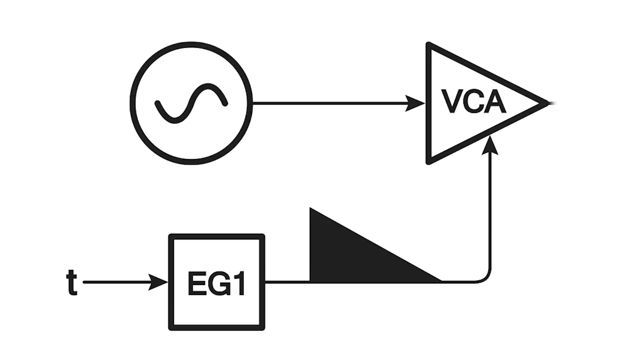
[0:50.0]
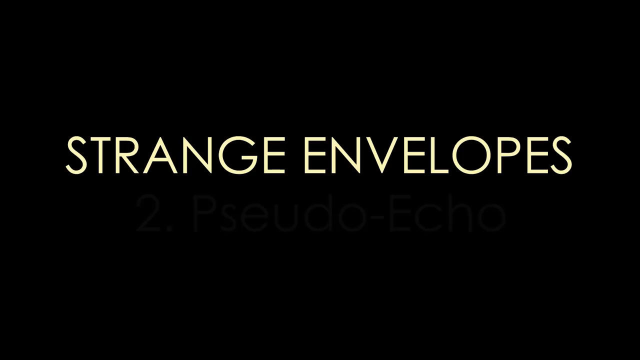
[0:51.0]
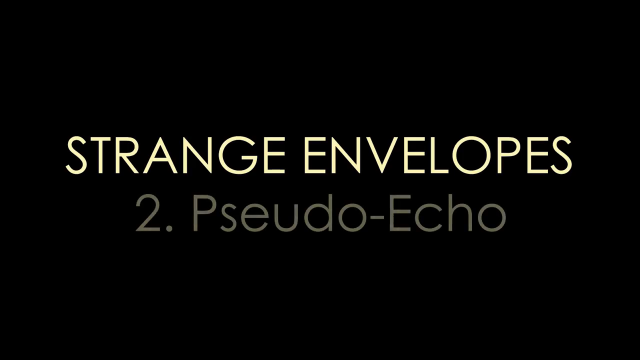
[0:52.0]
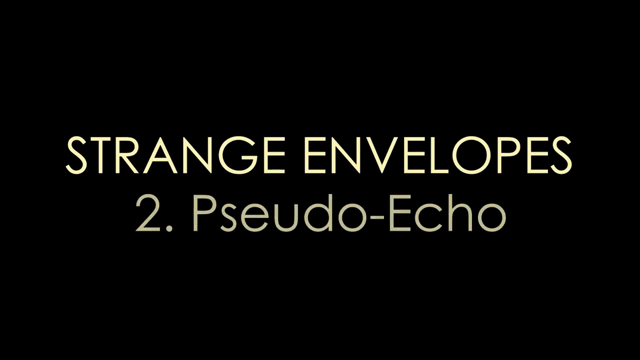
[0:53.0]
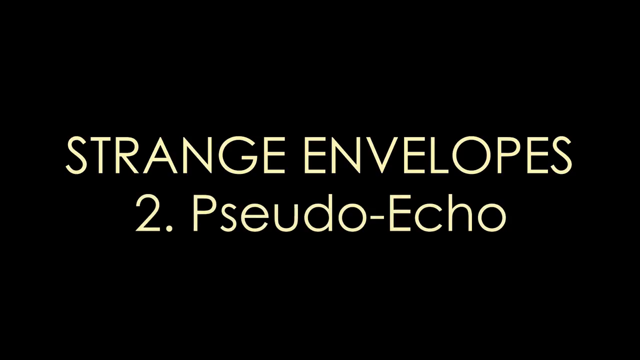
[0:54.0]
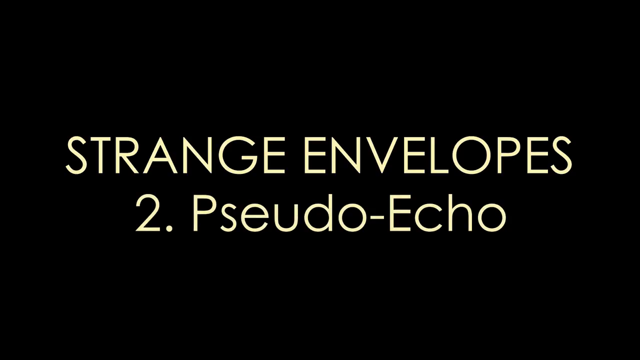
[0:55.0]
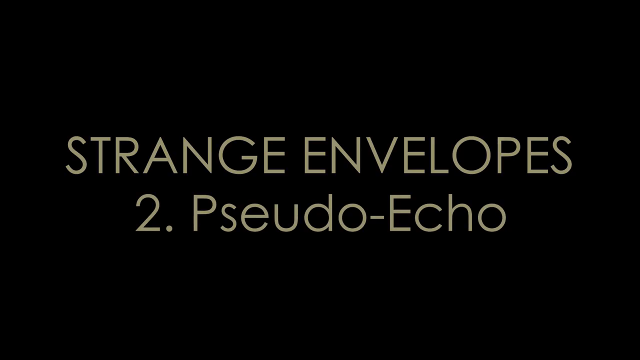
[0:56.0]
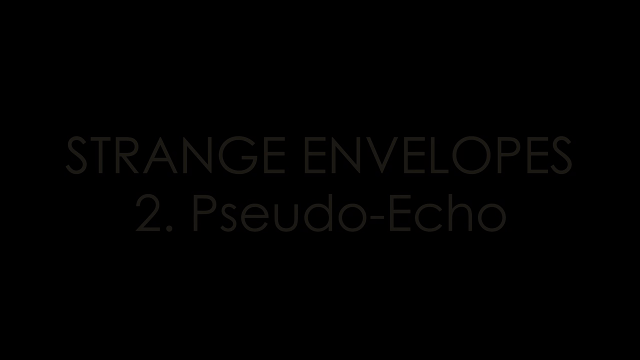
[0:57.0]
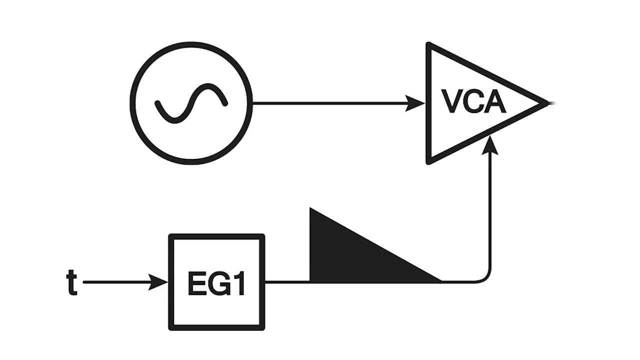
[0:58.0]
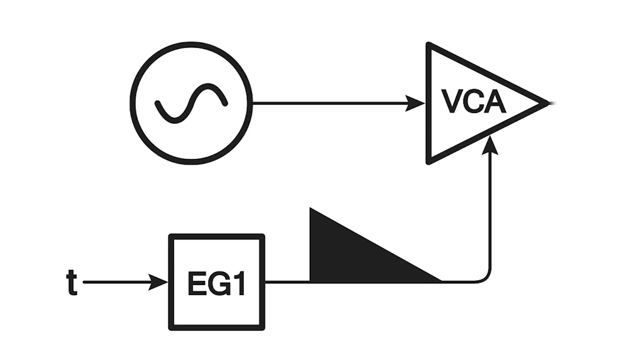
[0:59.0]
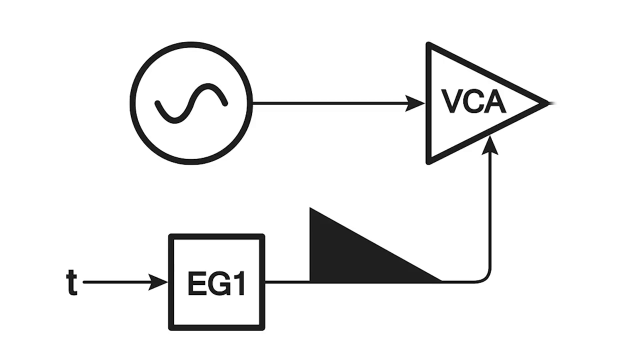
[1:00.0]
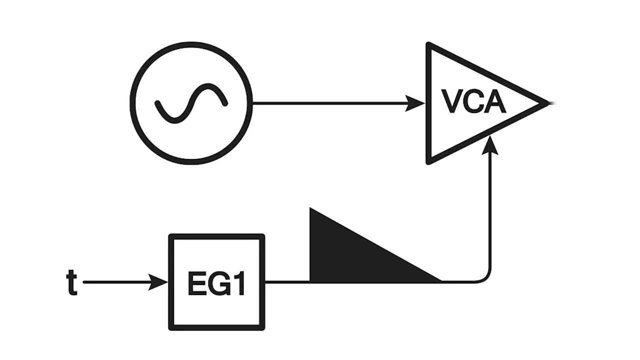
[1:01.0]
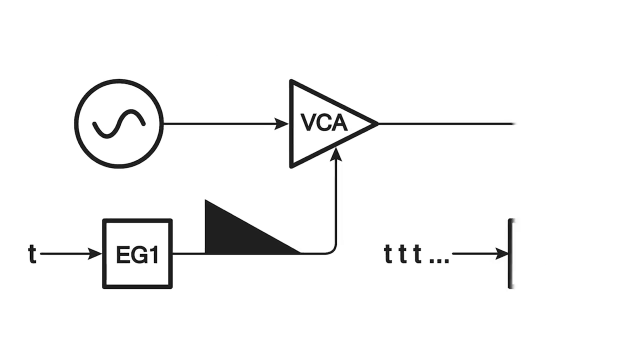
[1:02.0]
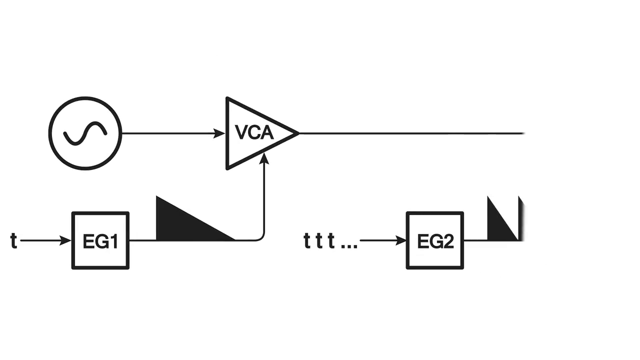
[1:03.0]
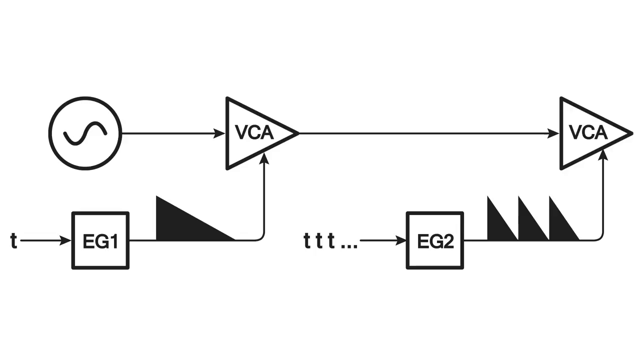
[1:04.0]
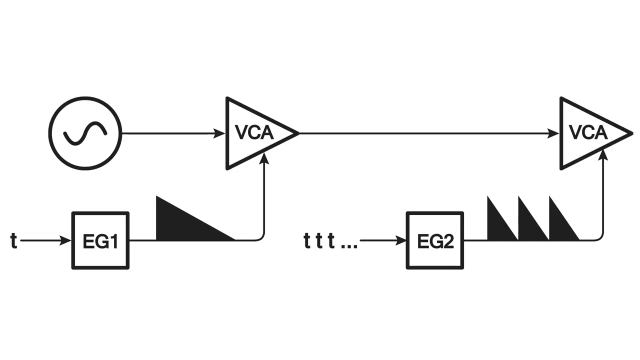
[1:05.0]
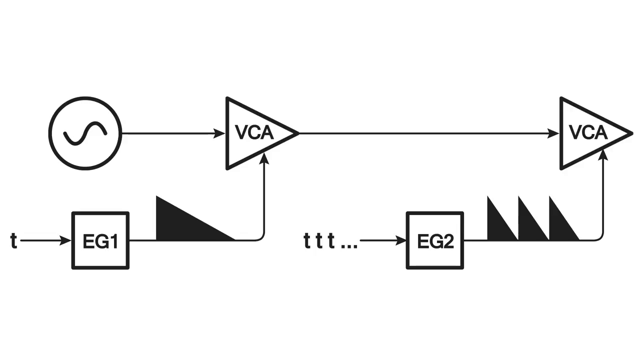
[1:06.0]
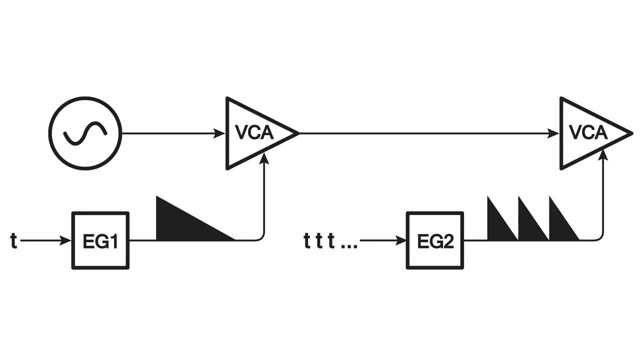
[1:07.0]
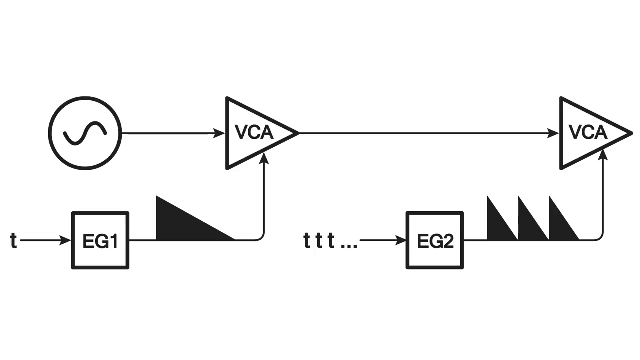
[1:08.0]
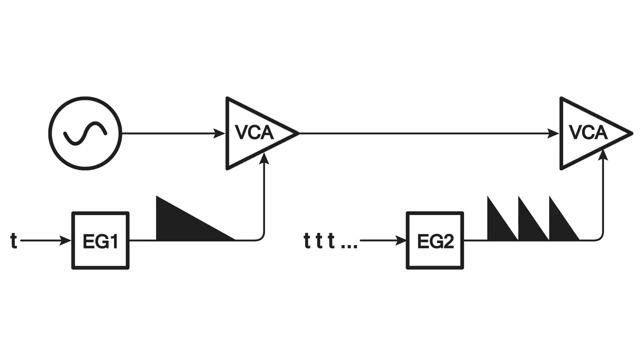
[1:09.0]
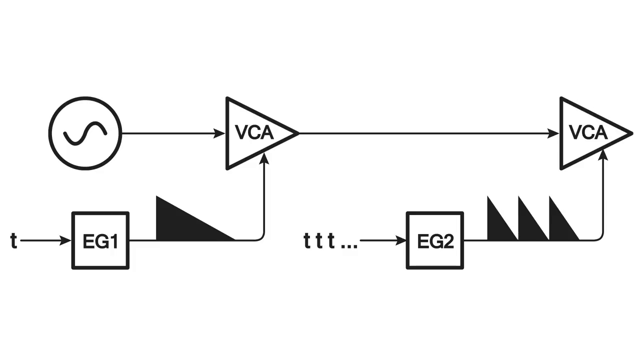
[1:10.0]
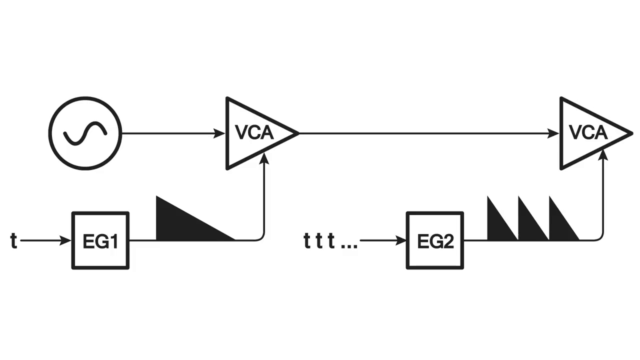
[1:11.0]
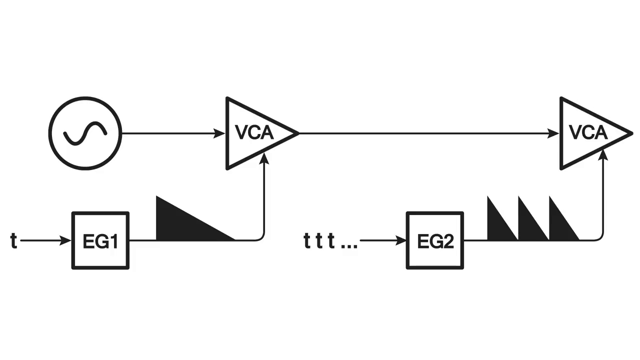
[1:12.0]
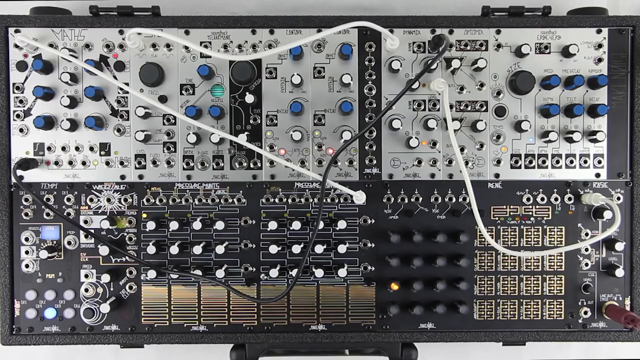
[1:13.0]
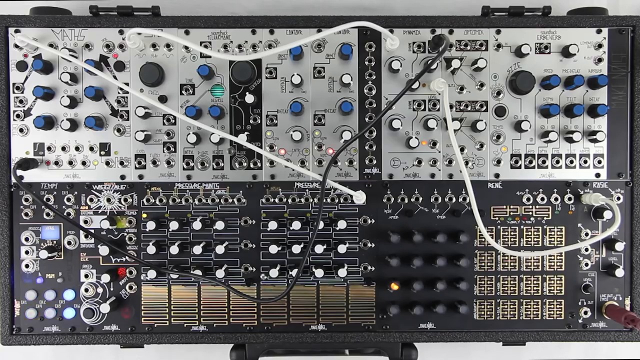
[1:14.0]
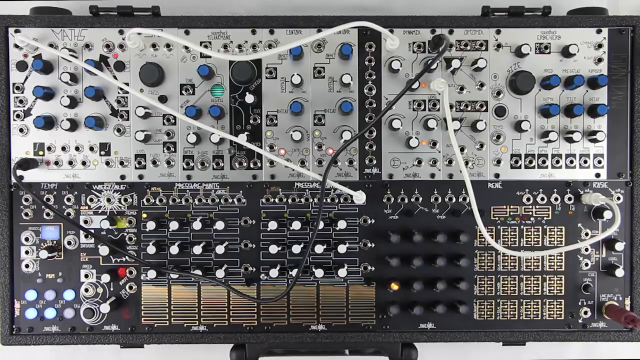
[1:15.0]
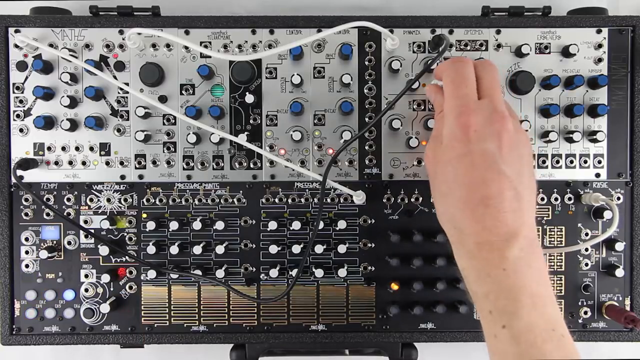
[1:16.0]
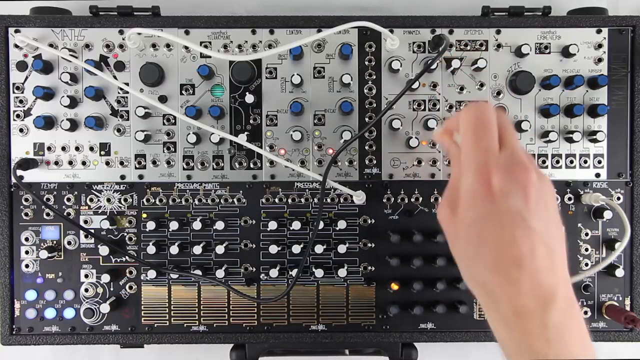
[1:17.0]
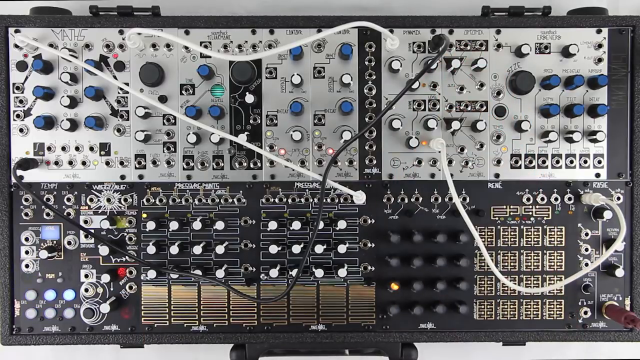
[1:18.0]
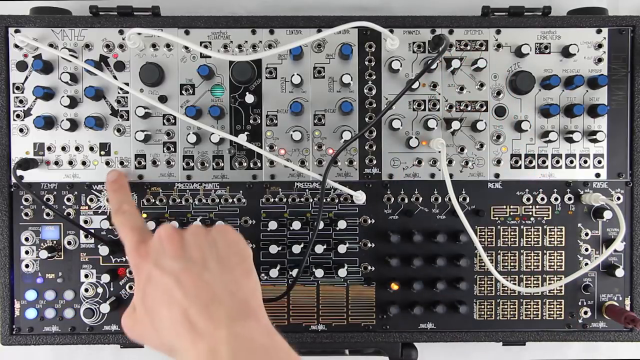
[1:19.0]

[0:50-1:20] A circuit diagram appears on a white background, drawn with black writing. The first graphic is a circle with a sideways S in it, with an arrow drawn to a black triangle containing the word "VCA". Below that is a solid black 90-degree triangle with nothing inside it. To its right is a black-outlined square with a white interior and the words "EG1", with an arrow pointing to it and, to its right, a lowercase letter "t". The screen reads "strange envelopes, number 2, pseudo echo" along with this graphic. The view then enlarges out to a bigger graphic with another triangle leading to the word "VCA" and an arrow pointing up to it. Next, video shows a human hand pushing those areas on the actual circuit board, so the drawing is shown before the steps are done on the real board.